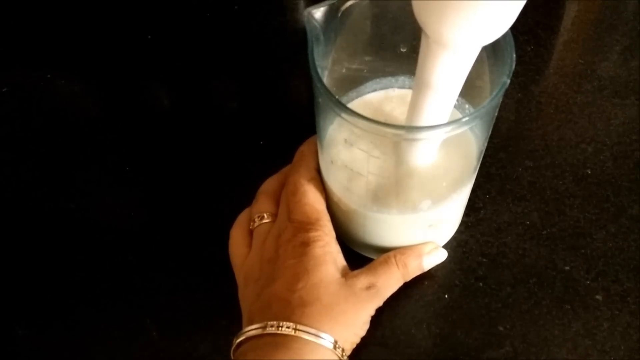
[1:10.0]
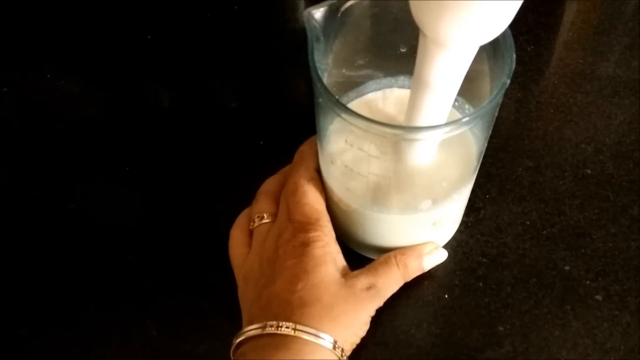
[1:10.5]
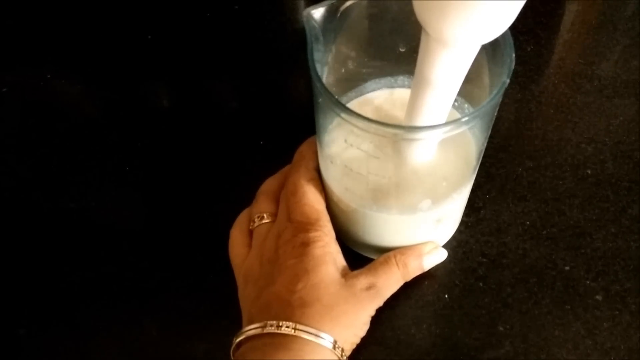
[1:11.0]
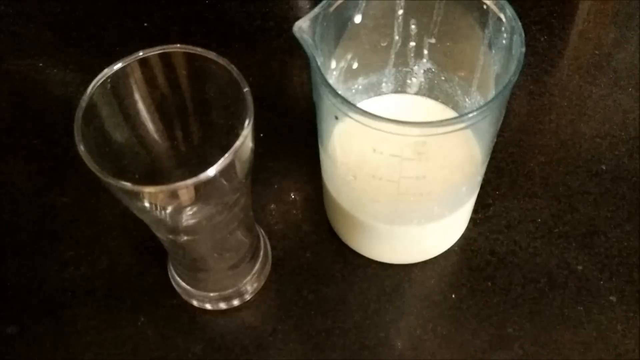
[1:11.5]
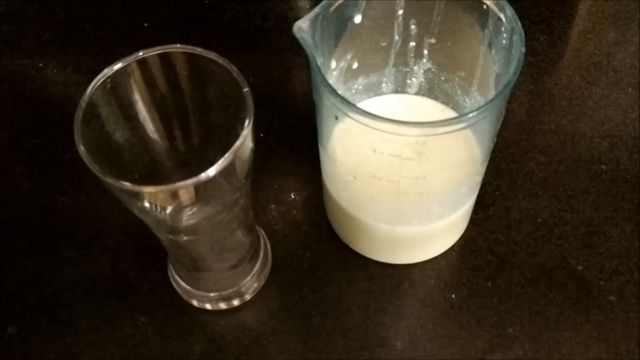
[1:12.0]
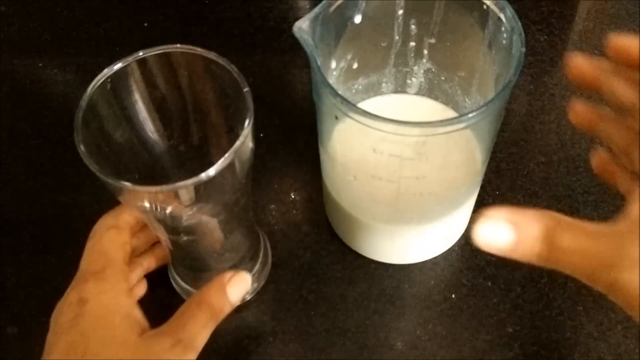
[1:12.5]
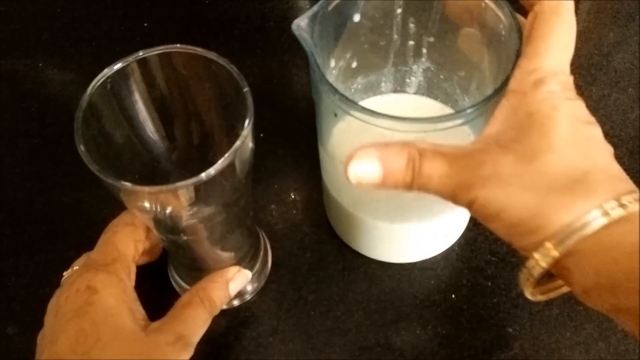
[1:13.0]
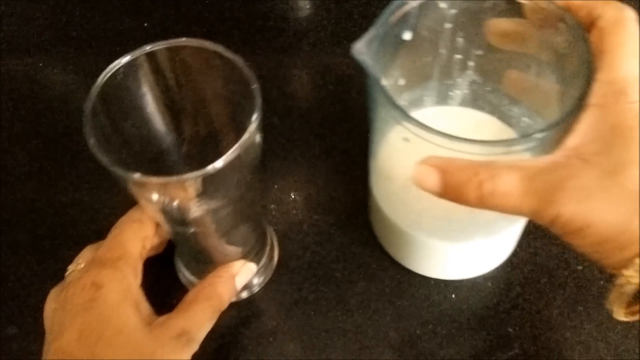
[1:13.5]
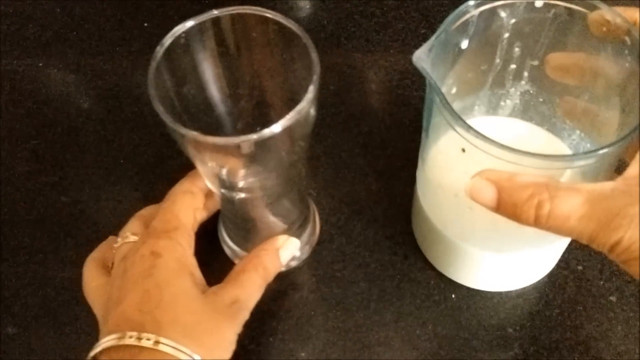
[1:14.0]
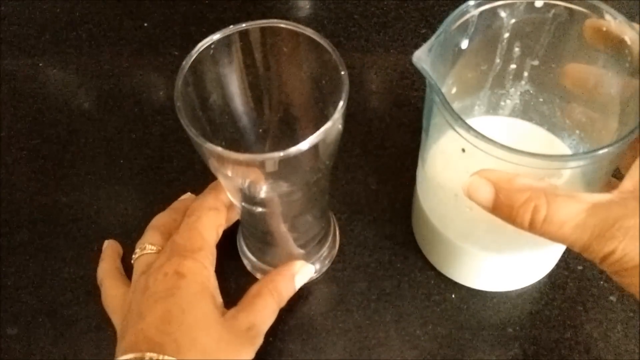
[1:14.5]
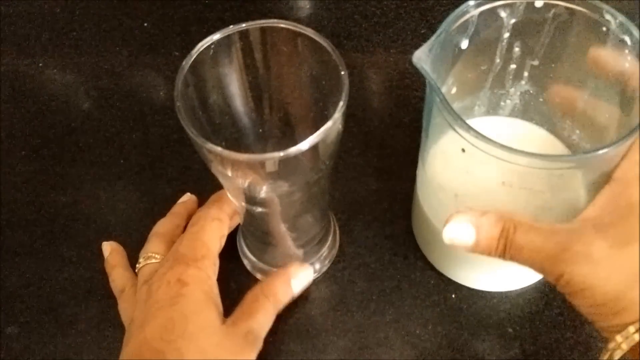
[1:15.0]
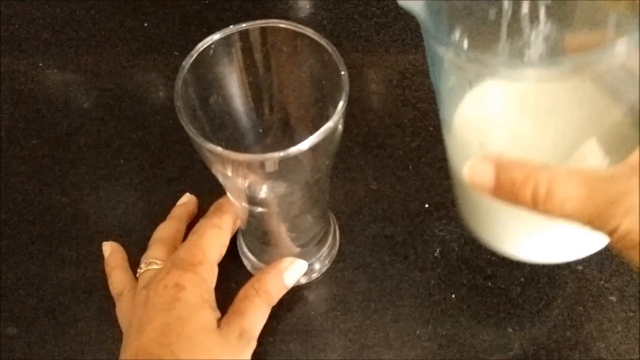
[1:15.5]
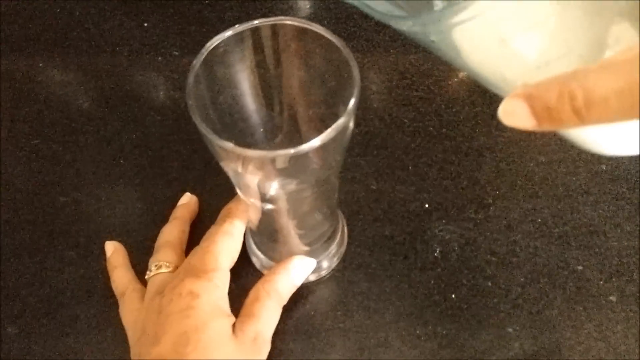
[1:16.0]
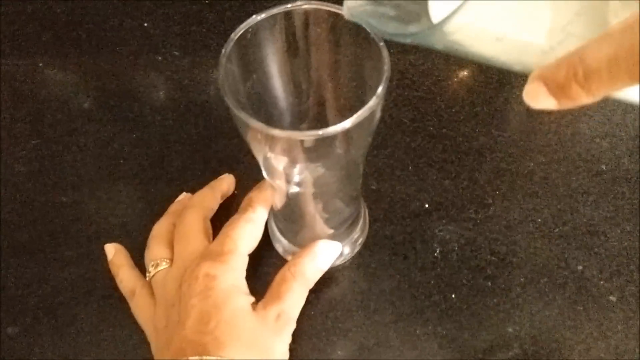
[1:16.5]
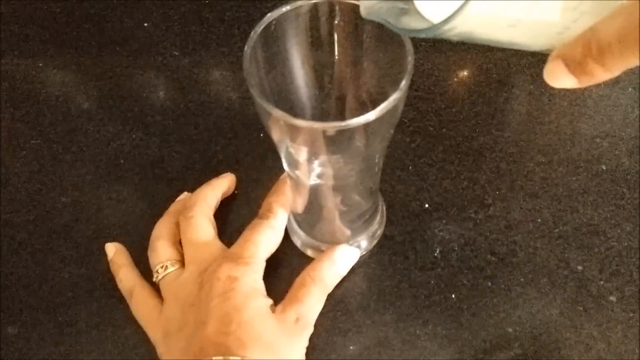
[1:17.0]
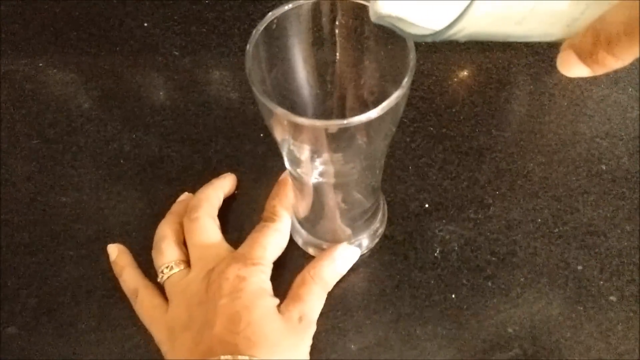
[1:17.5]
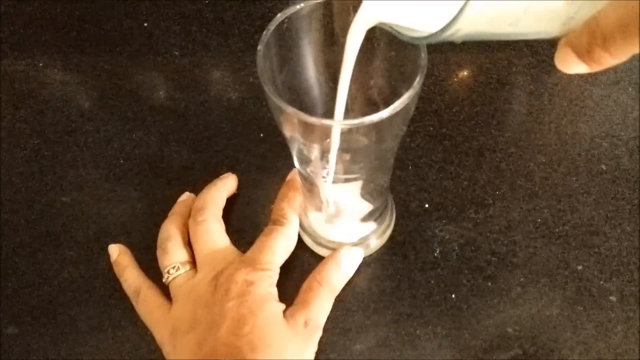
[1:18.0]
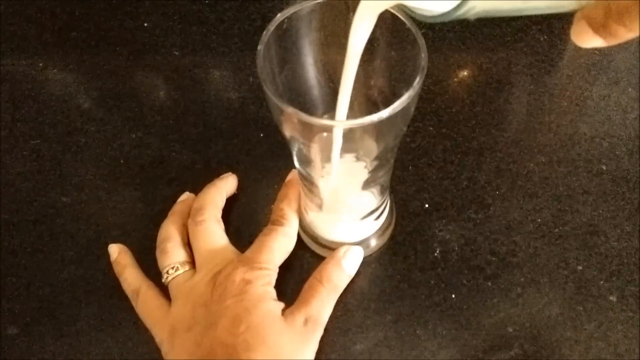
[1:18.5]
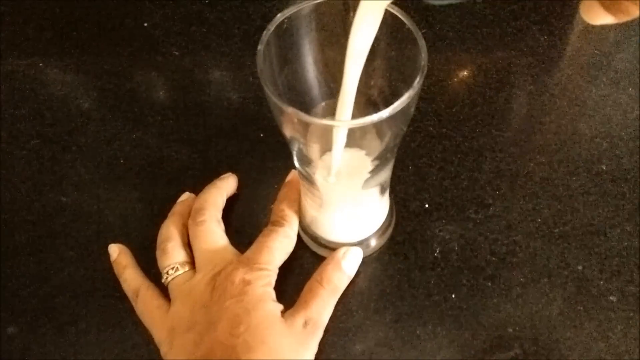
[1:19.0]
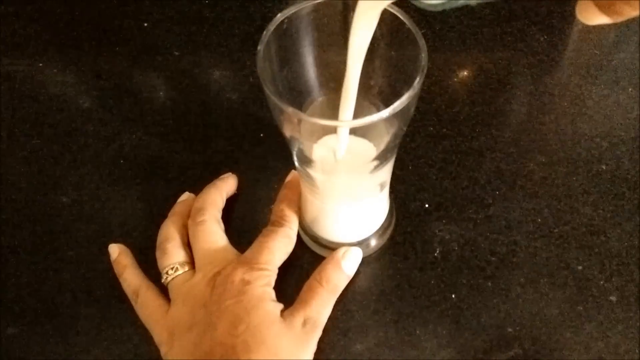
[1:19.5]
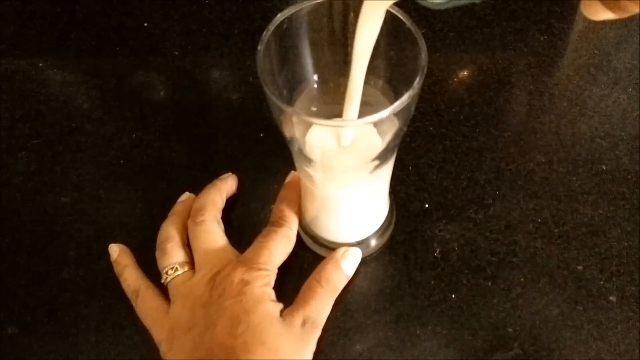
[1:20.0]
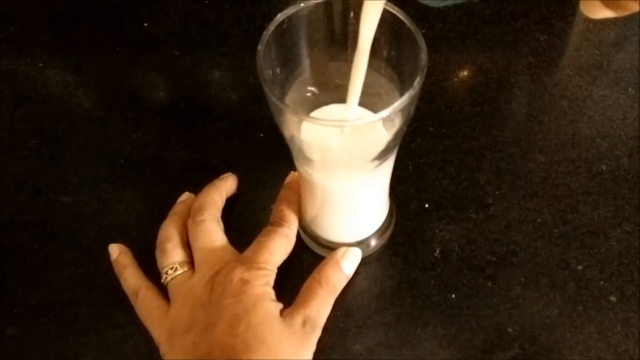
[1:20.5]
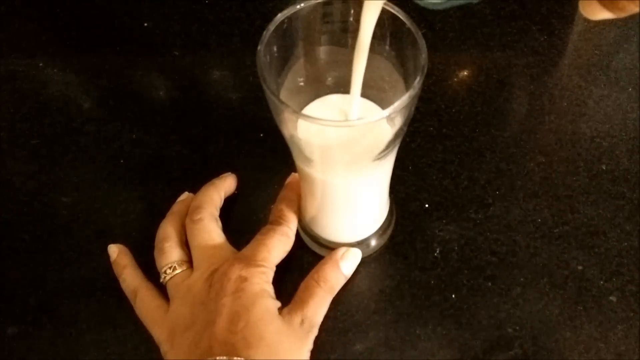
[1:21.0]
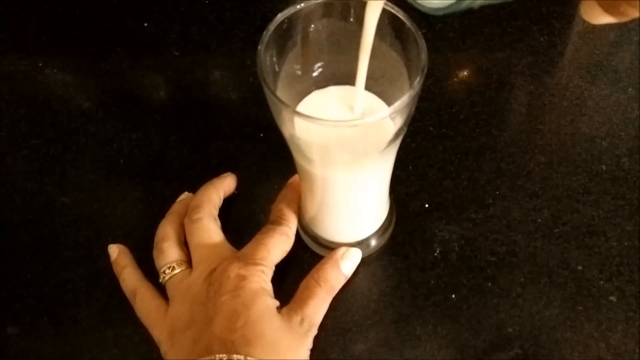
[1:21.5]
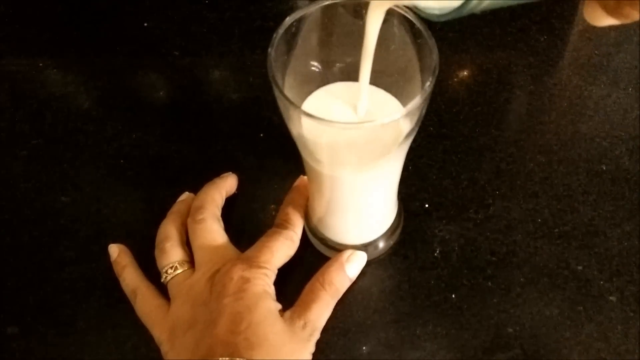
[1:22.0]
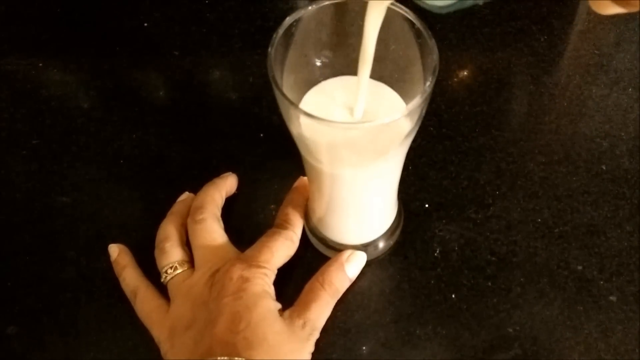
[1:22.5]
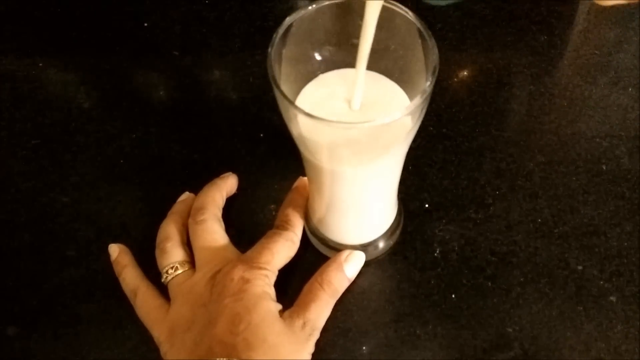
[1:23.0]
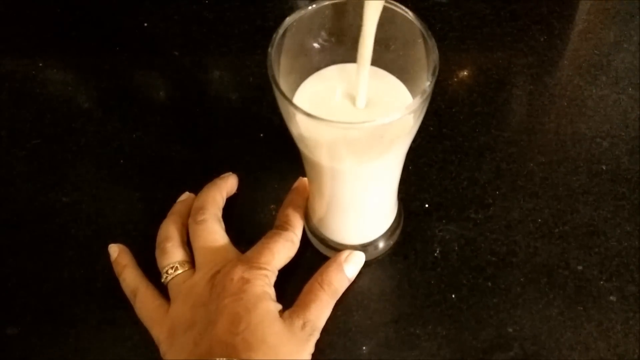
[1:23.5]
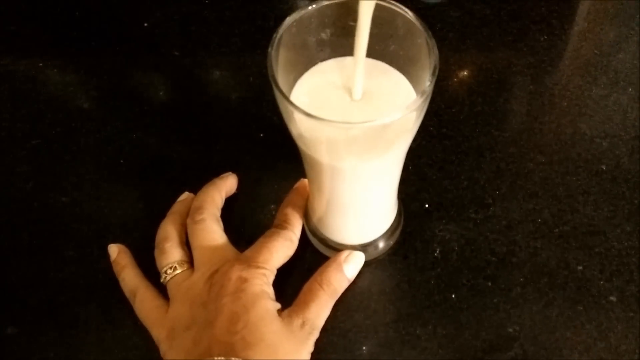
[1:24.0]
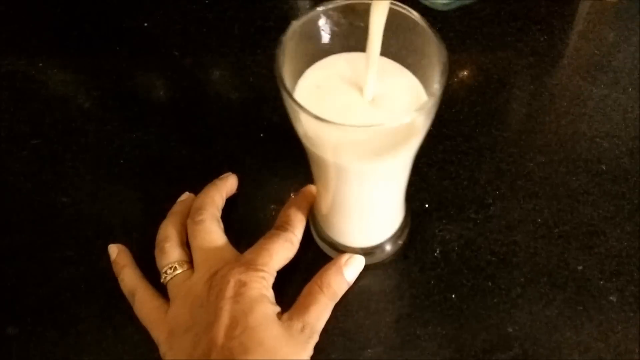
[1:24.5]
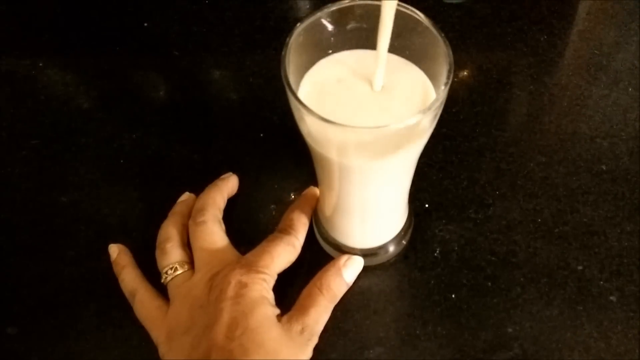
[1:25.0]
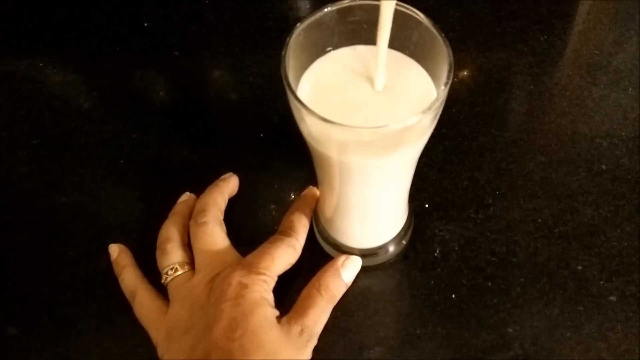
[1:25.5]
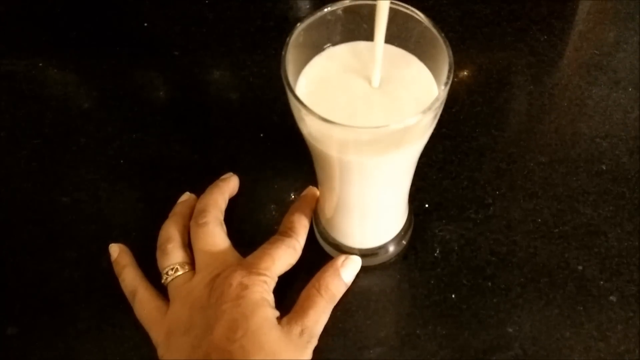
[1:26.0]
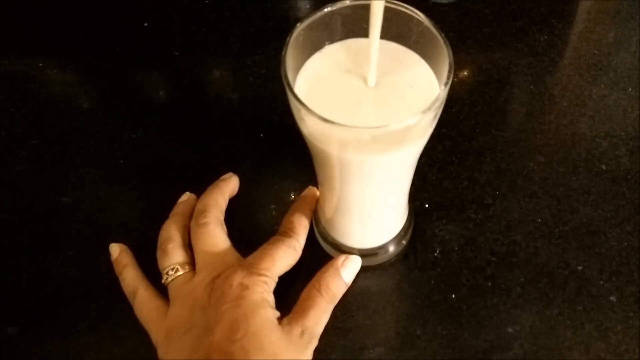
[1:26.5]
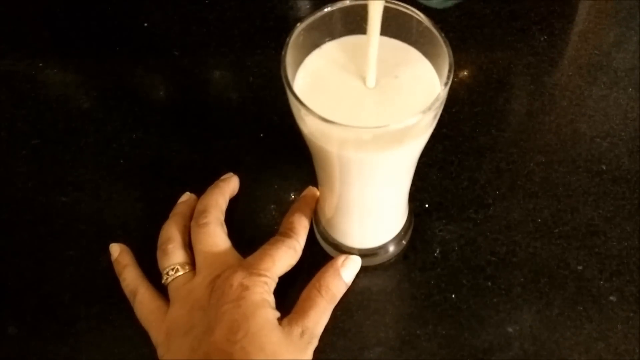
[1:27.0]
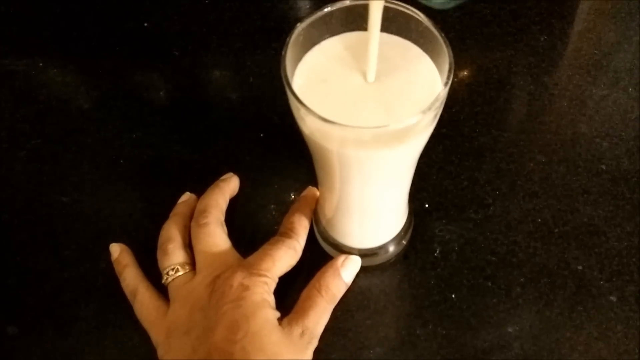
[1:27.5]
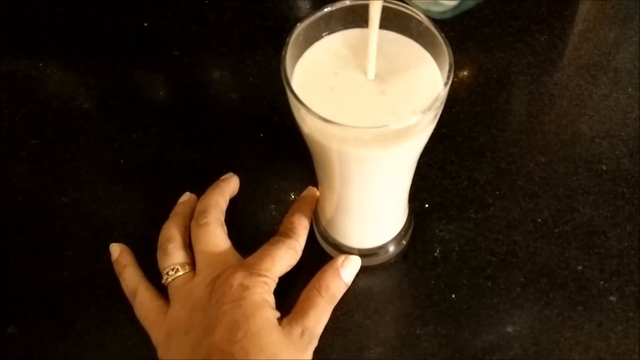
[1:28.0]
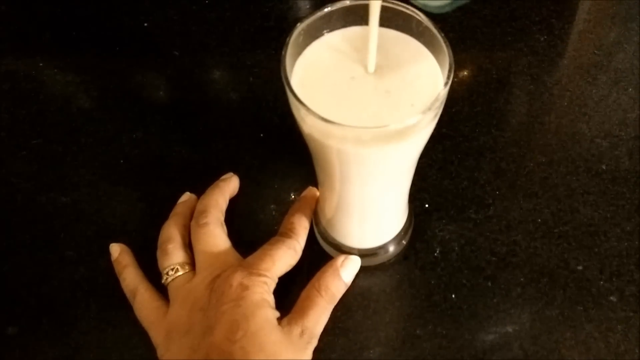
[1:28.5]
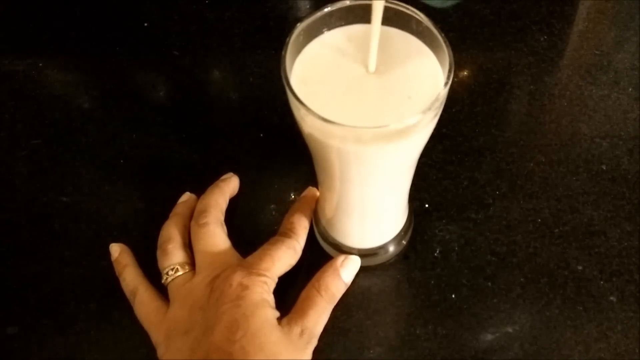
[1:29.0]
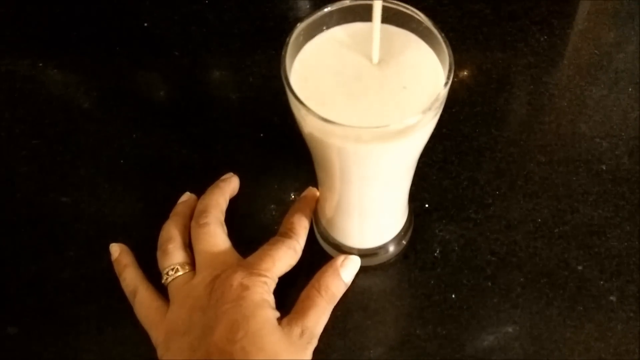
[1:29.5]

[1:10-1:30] A woman's hand is placed on a clear glass cooking beaker on a black marble kitchen top; a gold ring is on her finger. An electric mixer in the beaker mixes a white, sort of thick liquid slowly, and it bubbles up as the mixer takes effect. She then holds a tall glass, which looks like a kind of Coca-Cola glass, in her left hand, and has a bangle on her right hand, in which she holds the clear glass beaker with the white substance. She places the two of them in the middle of the screen, then picks up the beaker and starts pouring the white substance into the glass, holding the glass steady with the thumb and first finger of her left hand so it doesn't move. The liquid looks like milk but slightly thicker, apparently a thick milkshake.